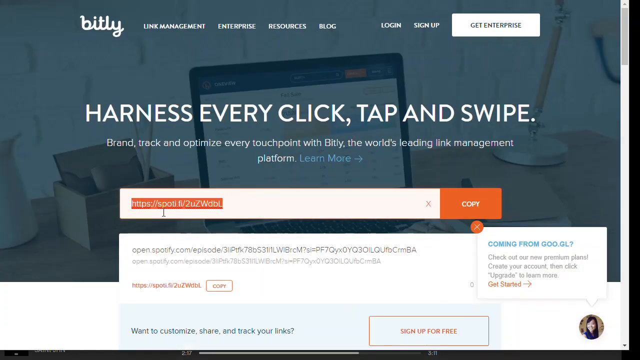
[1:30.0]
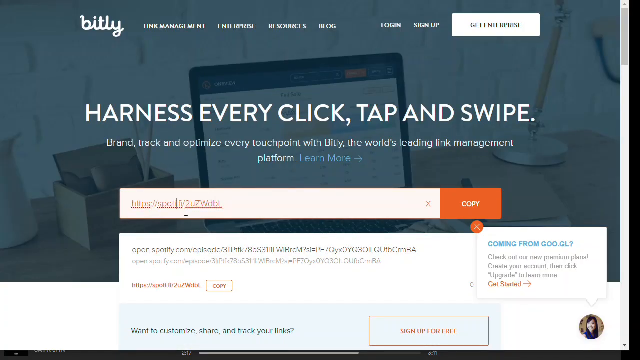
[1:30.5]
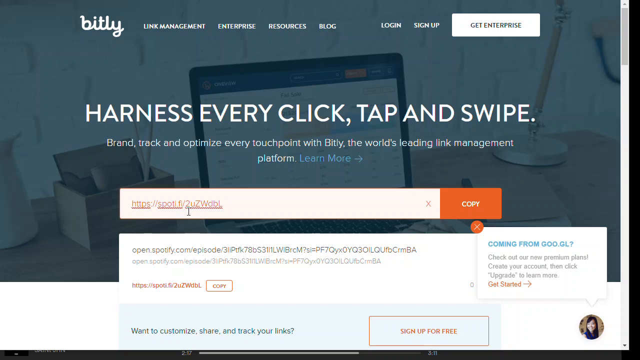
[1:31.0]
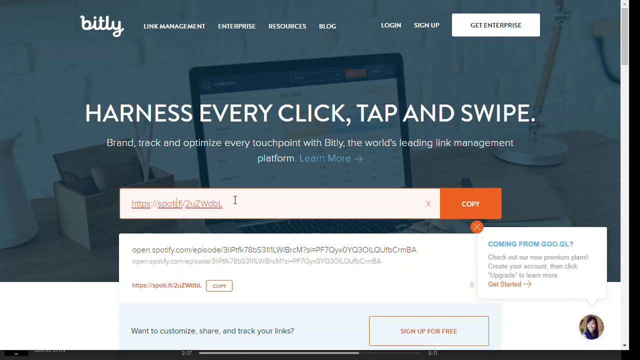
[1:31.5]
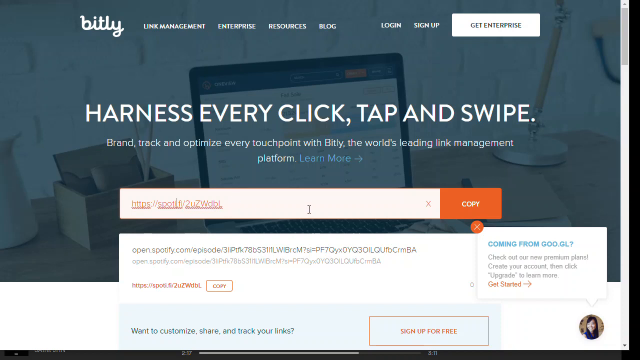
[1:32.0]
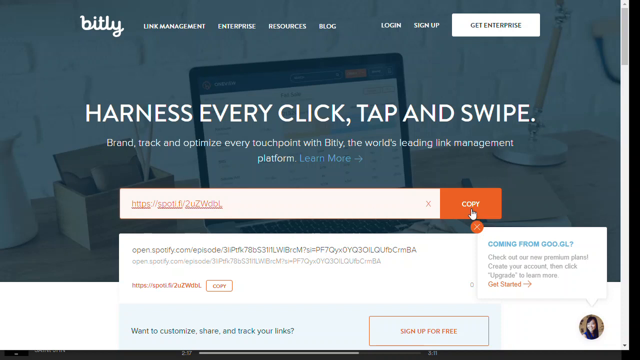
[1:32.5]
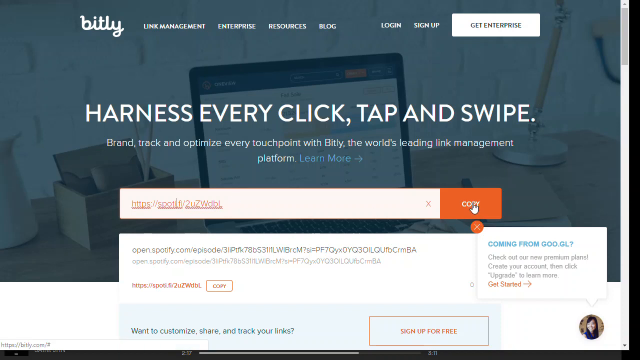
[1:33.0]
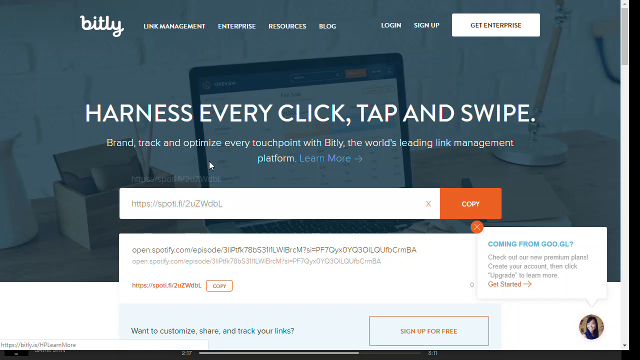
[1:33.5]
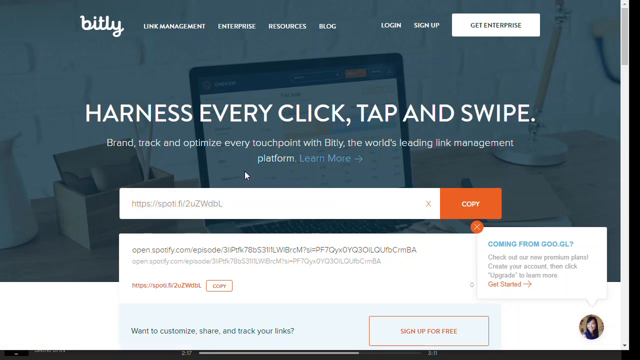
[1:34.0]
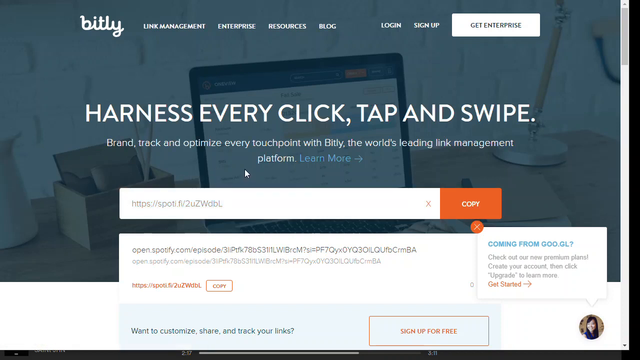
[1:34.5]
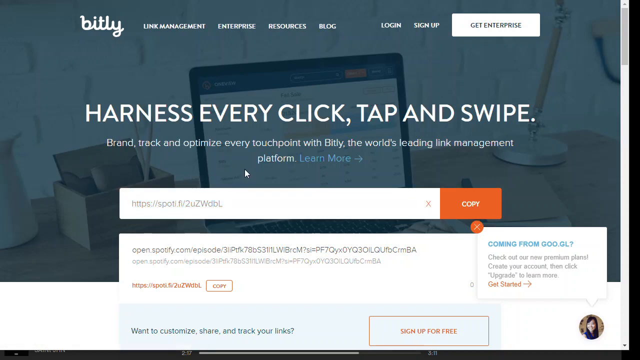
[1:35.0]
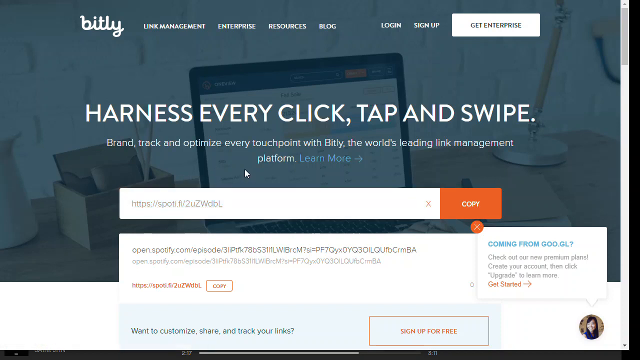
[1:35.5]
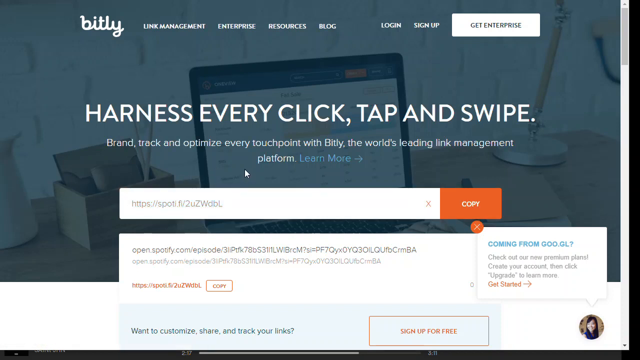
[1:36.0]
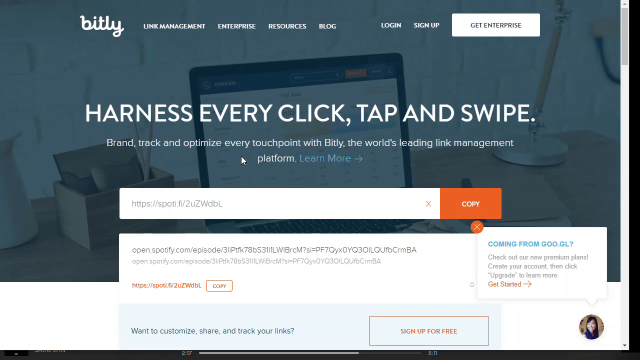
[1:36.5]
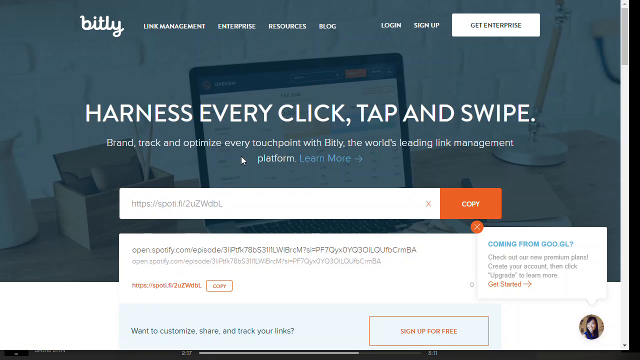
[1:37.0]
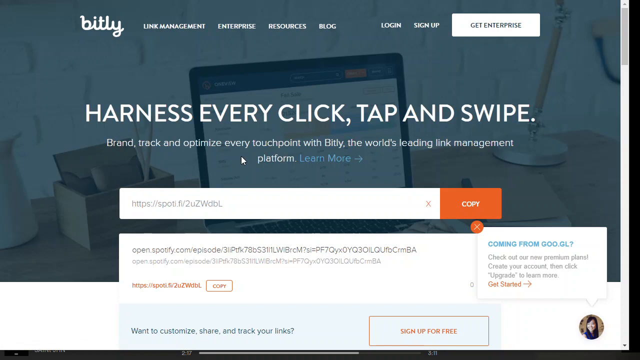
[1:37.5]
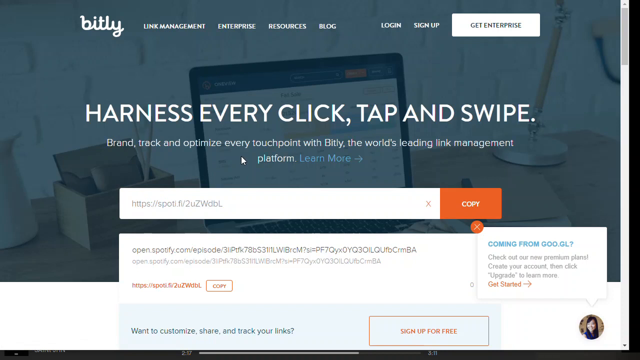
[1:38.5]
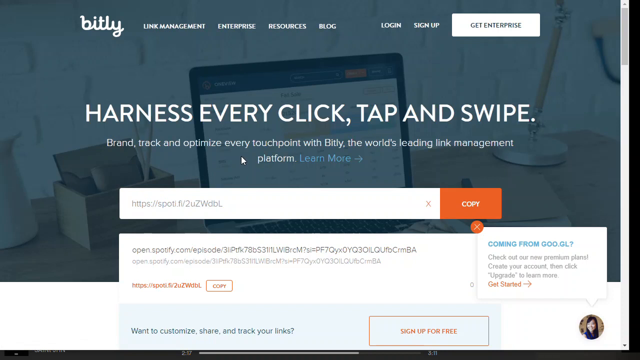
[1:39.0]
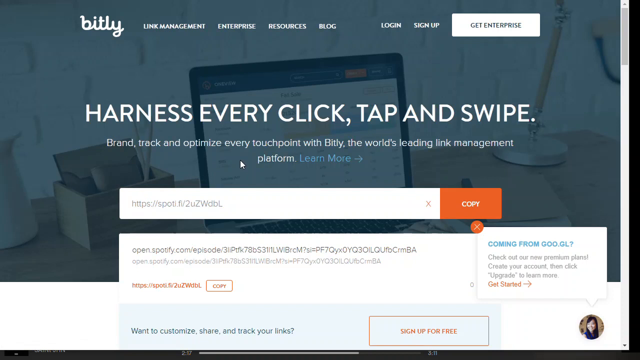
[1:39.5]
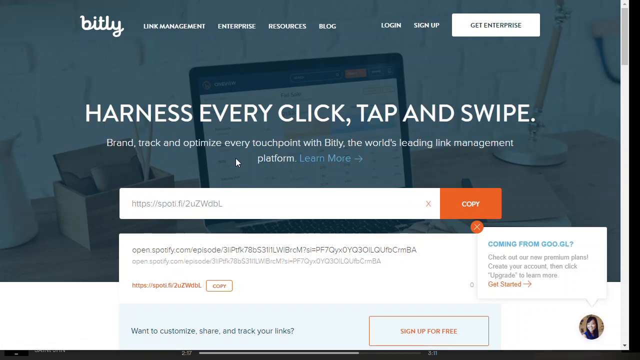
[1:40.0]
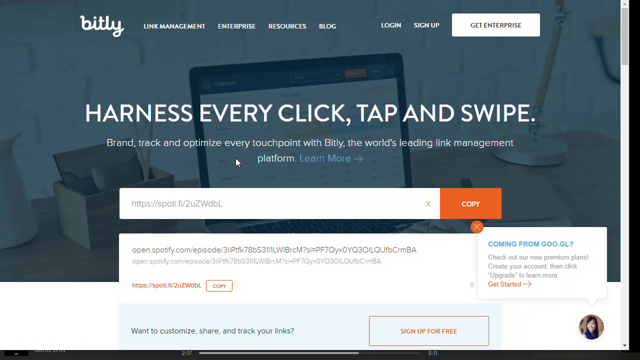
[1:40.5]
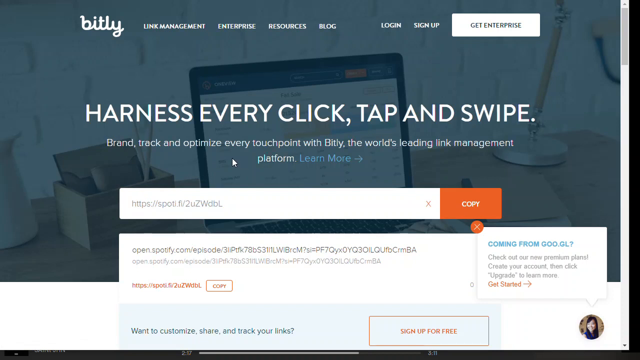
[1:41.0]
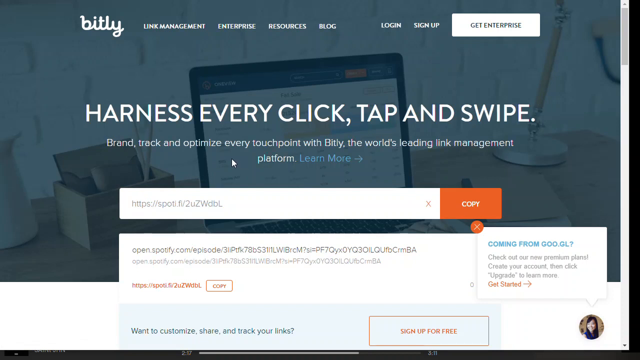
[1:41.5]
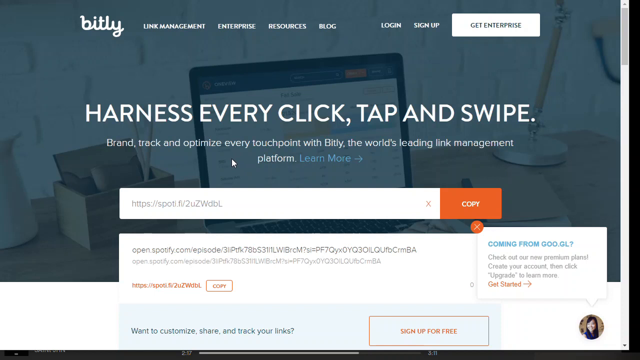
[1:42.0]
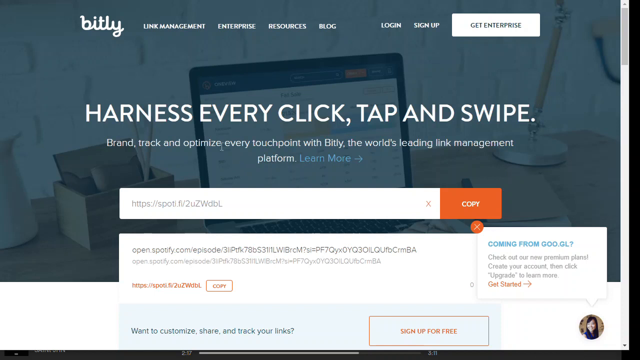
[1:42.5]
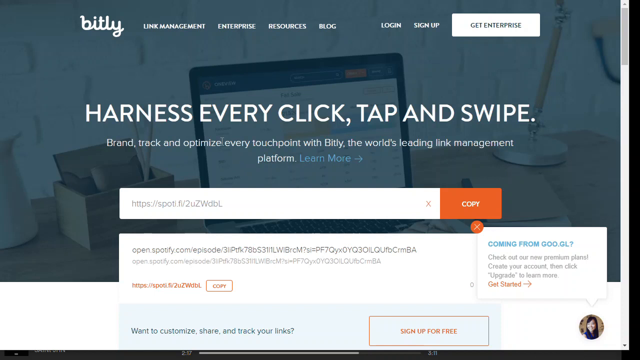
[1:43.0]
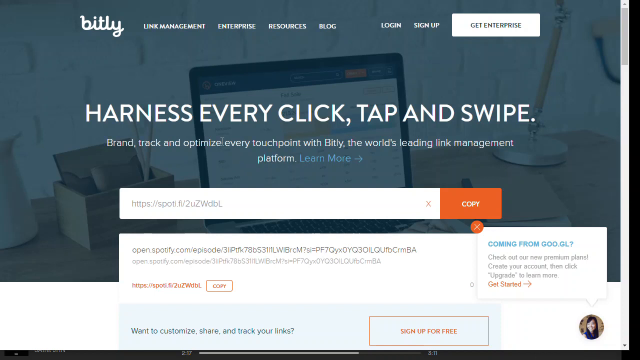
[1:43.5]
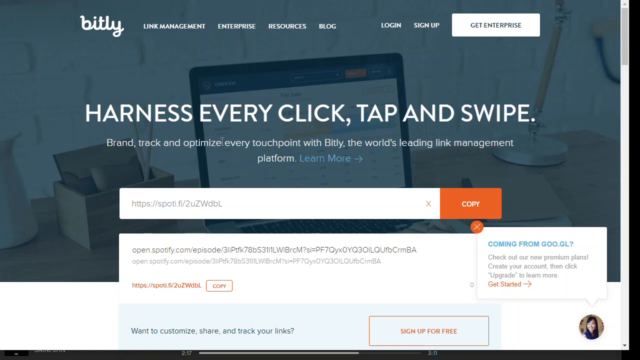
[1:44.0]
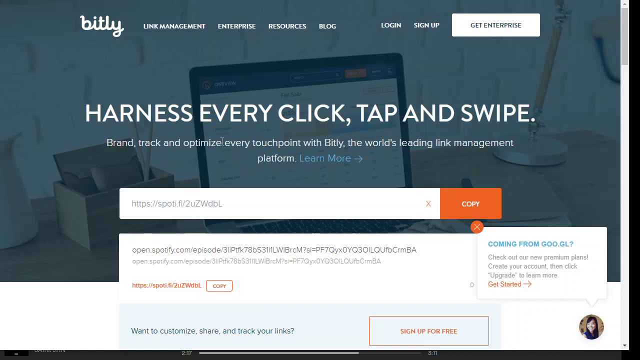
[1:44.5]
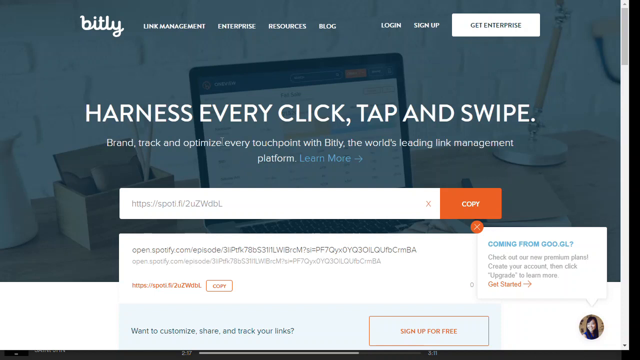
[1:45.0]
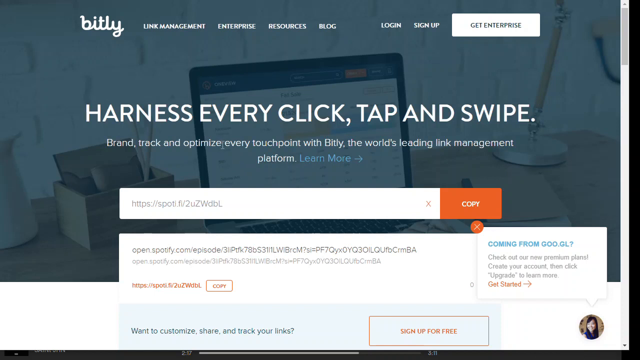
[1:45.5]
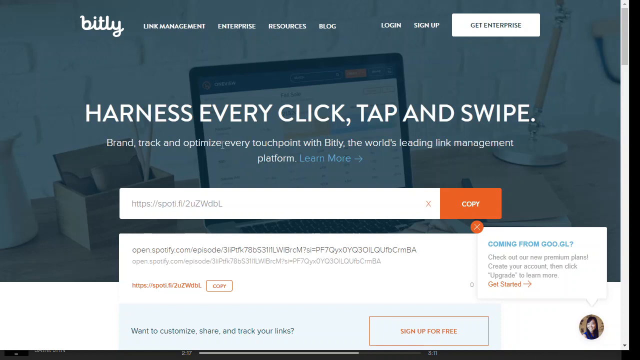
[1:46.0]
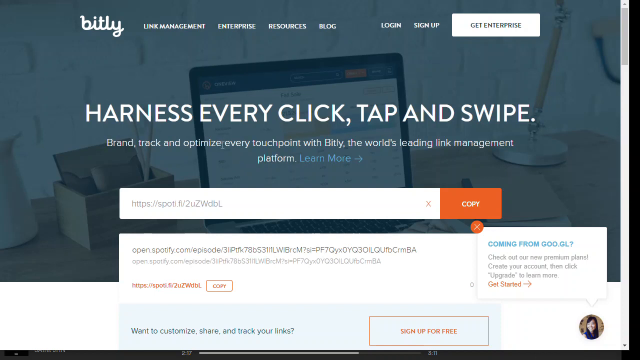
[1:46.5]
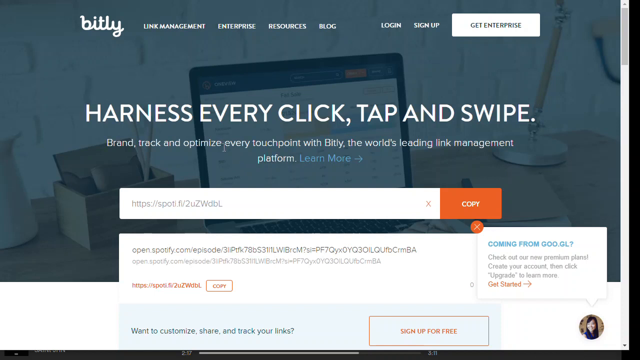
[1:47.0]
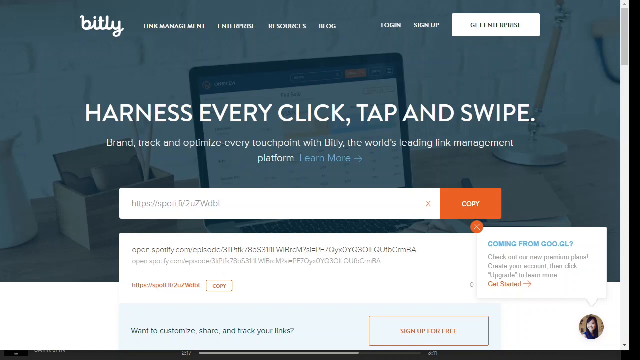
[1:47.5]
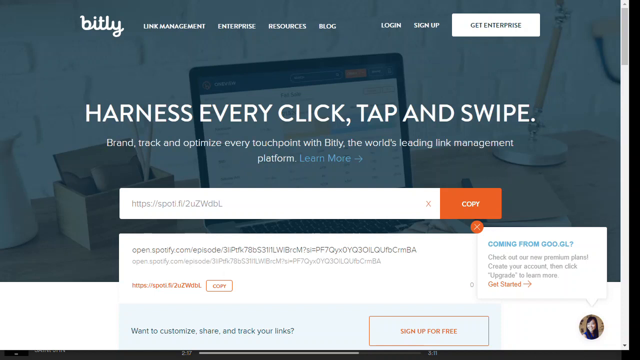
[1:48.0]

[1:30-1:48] Back on Bitly, the Spotify link is pasted into the URL shortener. The long URL, open.spotify.com followed by a series of characters, is shortened to just "https://spoti.fi," a much shorter version, showing that Bitly uses different domains for Apple and Spotify. At the top of the Bitly screen are the options "link management," "enterprise," "resources," "blog," "Login" and "sign up." On the right is a message that says "are you coming from Google? check out our new premium plans Create your account then click upgrade to learn more and get started." At the bottom of the screen a message says "customize, share, and track your links, sign up for free." There are several calls to action to create an account.